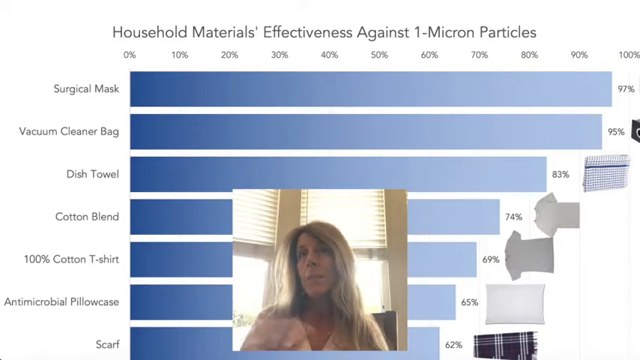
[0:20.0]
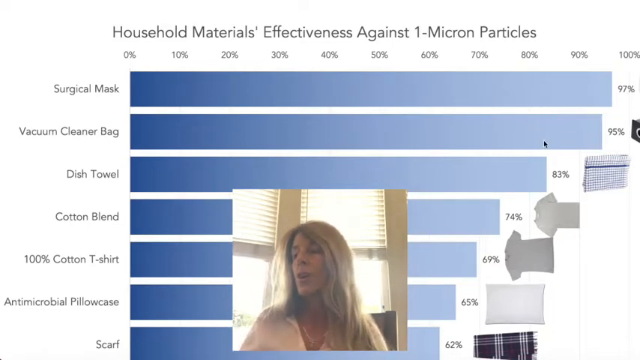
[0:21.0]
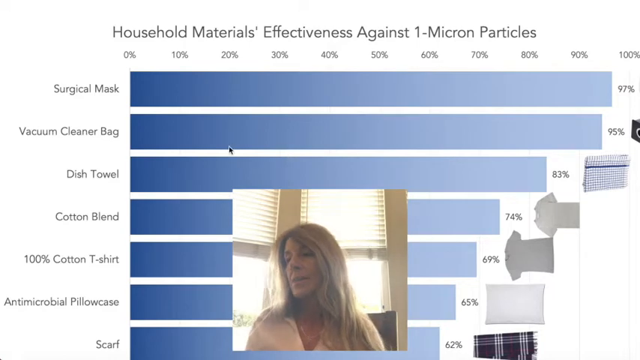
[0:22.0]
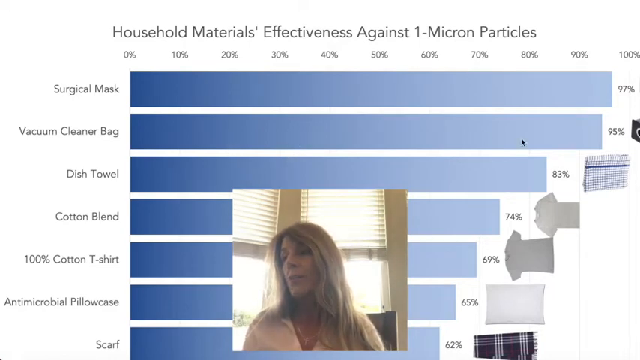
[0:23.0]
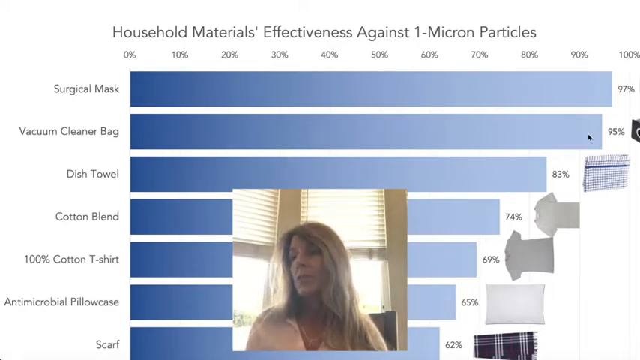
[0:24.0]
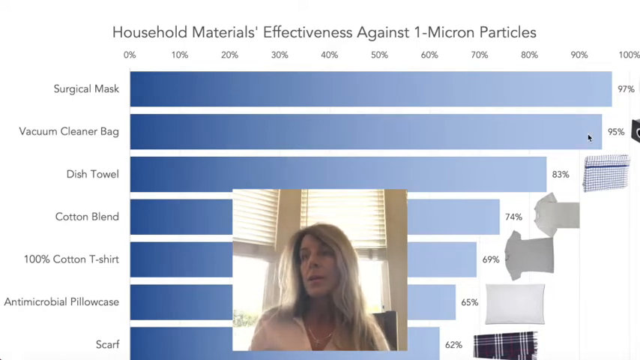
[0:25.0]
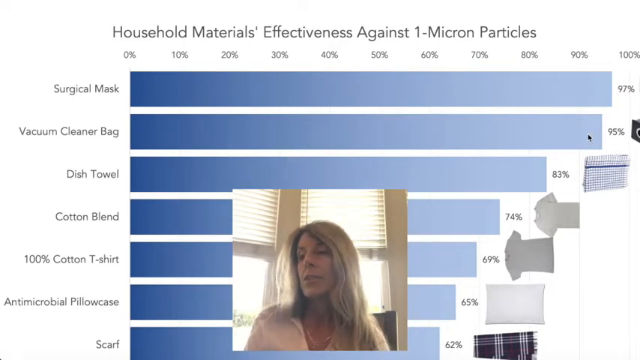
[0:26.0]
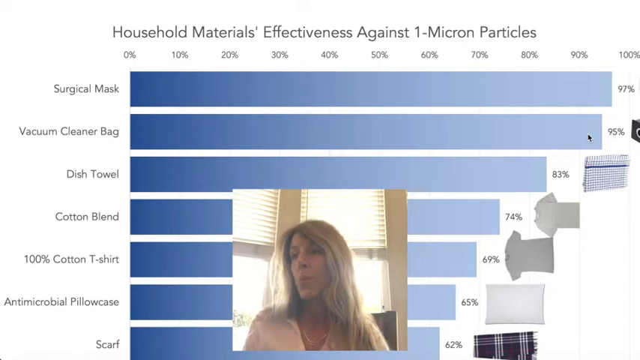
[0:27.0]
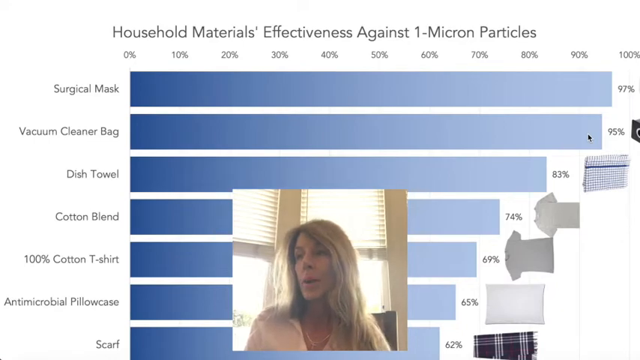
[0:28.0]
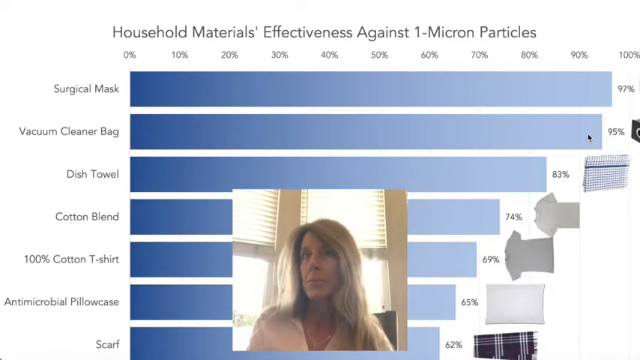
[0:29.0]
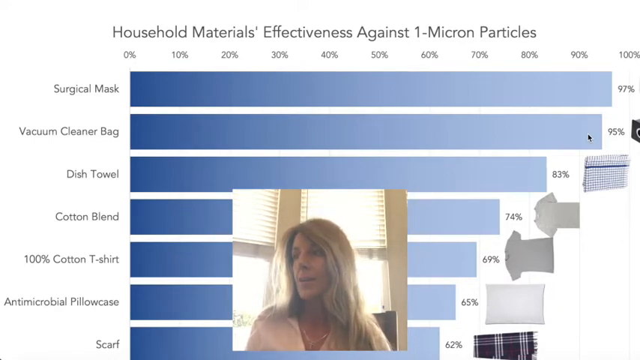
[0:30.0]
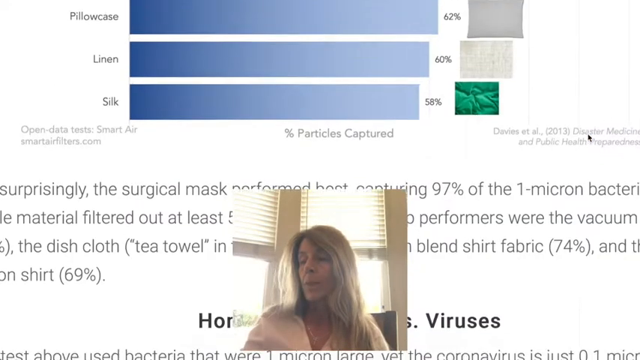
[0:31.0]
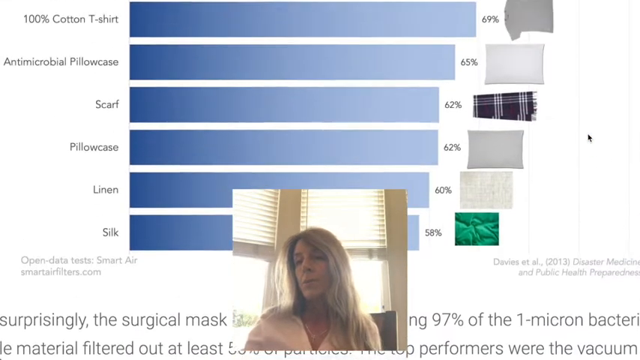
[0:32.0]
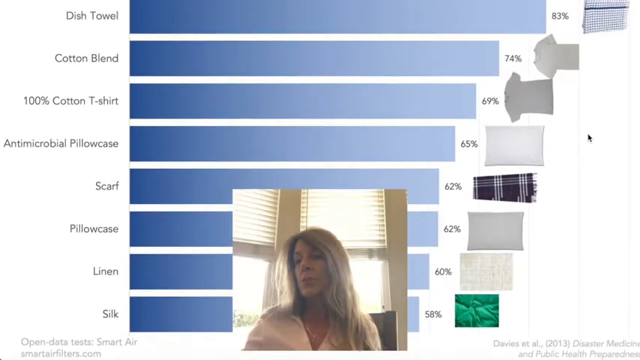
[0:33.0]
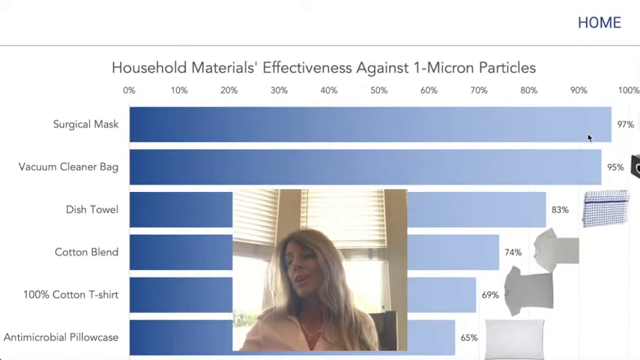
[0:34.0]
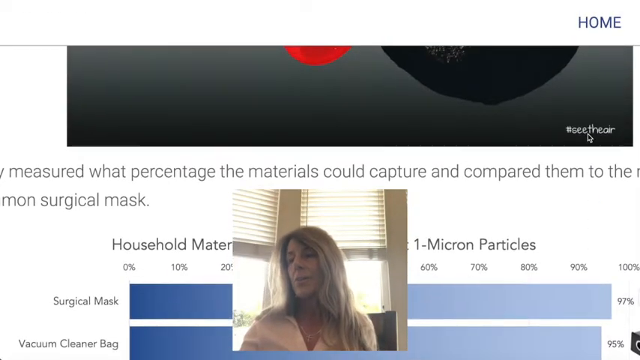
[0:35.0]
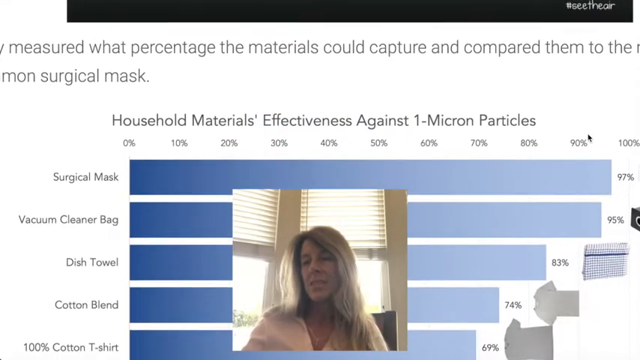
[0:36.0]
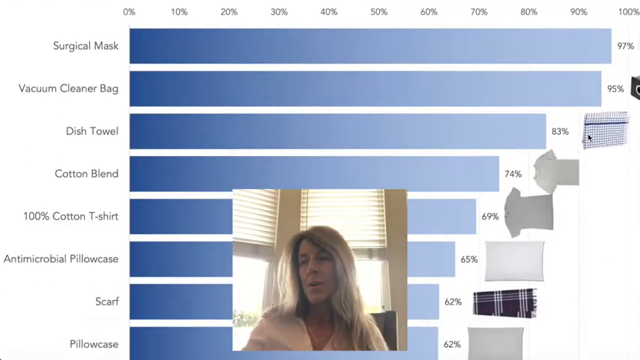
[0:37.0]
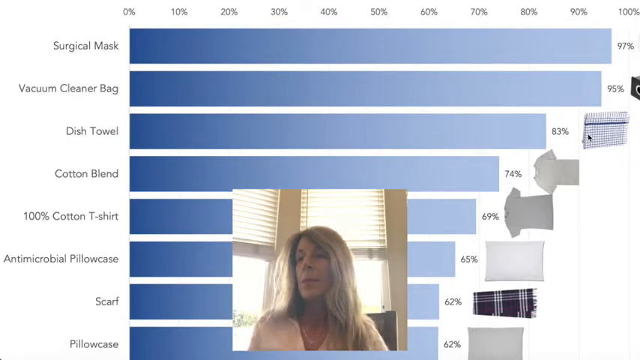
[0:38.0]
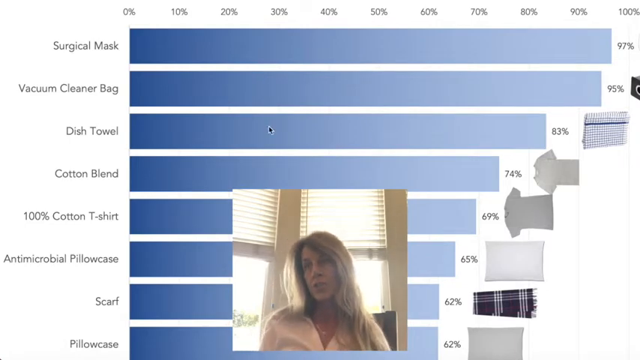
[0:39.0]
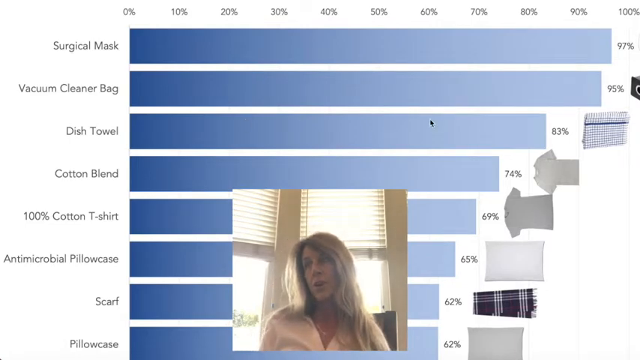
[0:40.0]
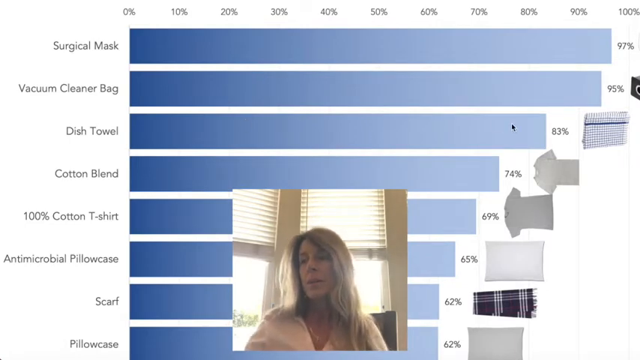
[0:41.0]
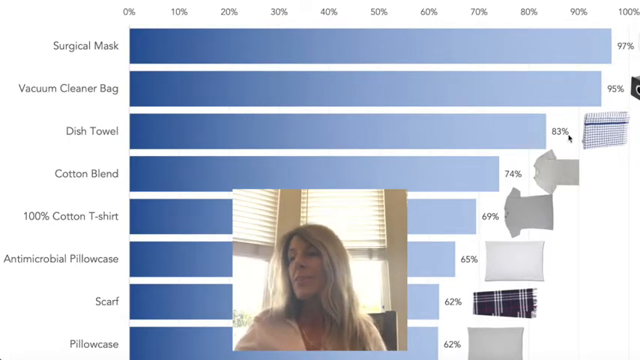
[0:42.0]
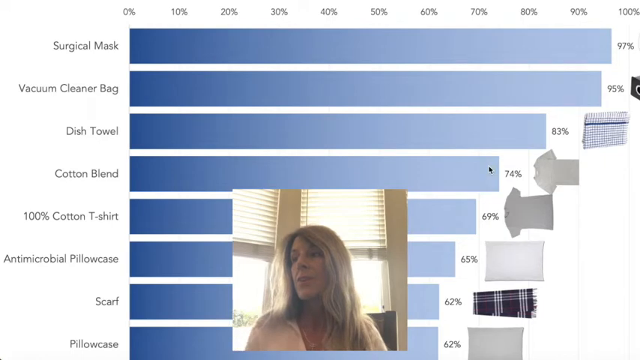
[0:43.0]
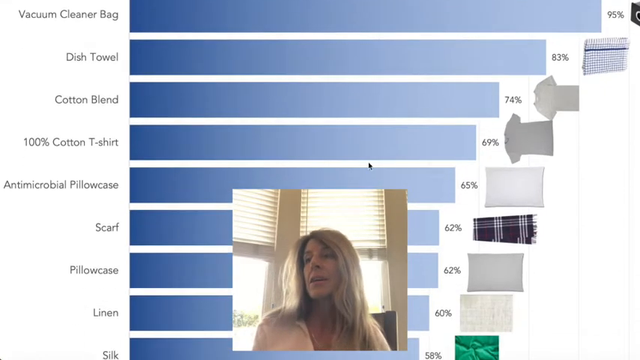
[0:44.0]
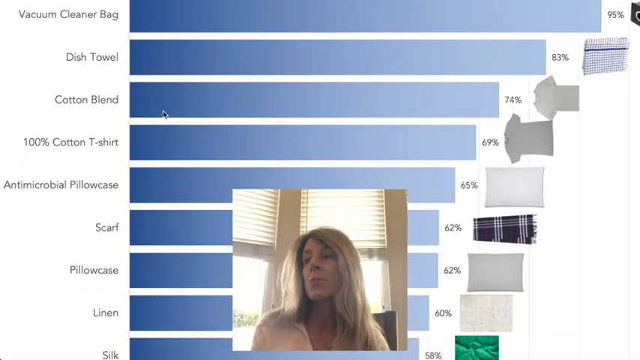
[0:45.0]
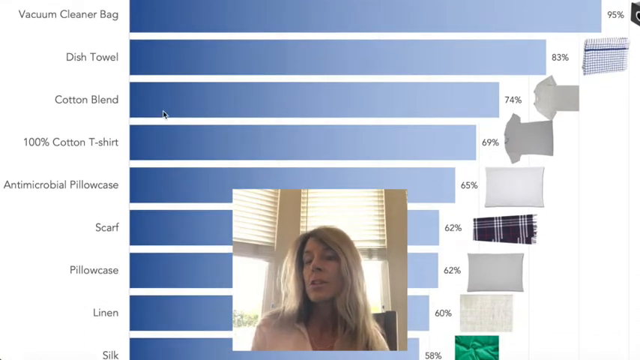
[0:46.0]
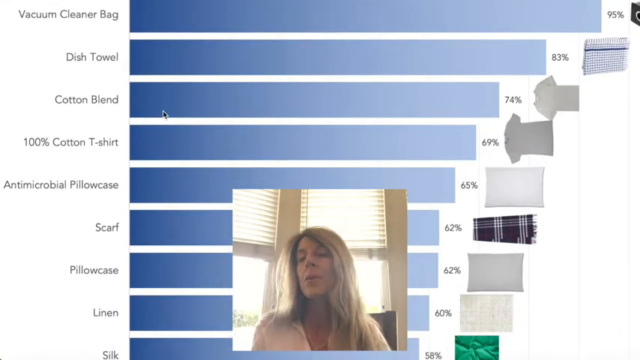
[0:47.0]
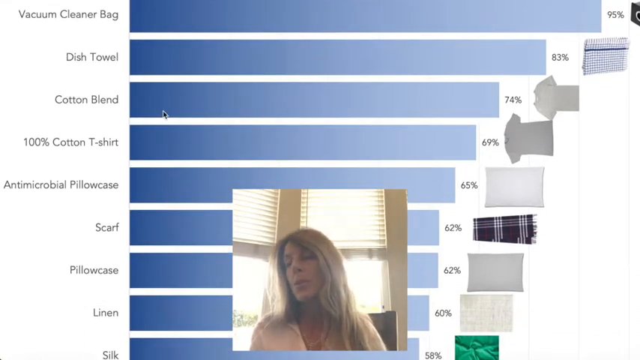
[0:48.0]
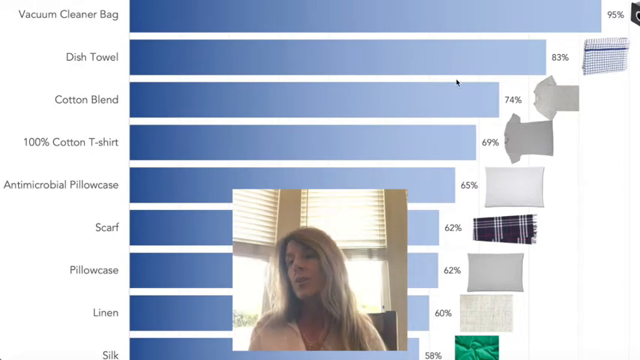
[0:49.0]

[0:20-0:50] The bar graph remains in the background with the woman in the foreground. The graph is titled "Household Materials Effectiveness Against 1-Micron Particles," with seven items on its Y axis and a range of 0% to 100% on its X axis. The woman, with long hair and a white shirt, appears in a screen at the bottom. She raises and lowers her right hand as the cursor moves steadily from the right side over the Vacuum Cleaner Bag bar toward the left. The cursor stops in the middle of the bar, then moves right until it is just left of the percentage to the right of the bar. The woman looks up and to the left as she continues speaking. The background shifts and pans up. At the bottom of the background is a paragraph of black text. As it pans up, three new bars appear at the bottom of the graph, labelled "Pillowcase" at 62%, "Linen" at 60% and "Silk" at 58%. She pauses briefly, then scrolls up further, revealing the word "Home" in blue text above the bar graph at the upper right of the background. Scrolling up a little more shows black text that says "measured what percentage the materials could capture and compared them to the," and beneath it, in black text, "common surgical mask." She scrolls back down while speaking to the viewer until the cursor hovers over the Dish Towel bar. She drags the cursor left and then right so it hovers just below and to the right of the Dish Towel percentage, then drags it down and to the left, scrolls down, and drags the cursor to the right.